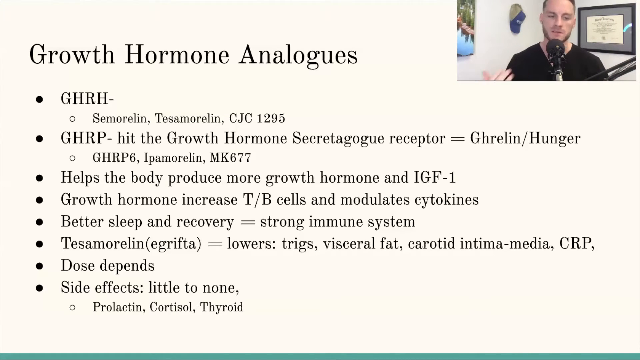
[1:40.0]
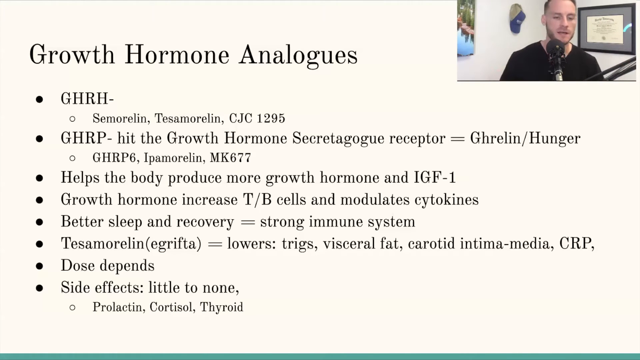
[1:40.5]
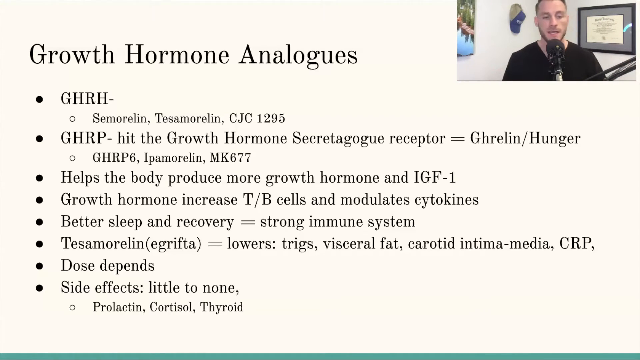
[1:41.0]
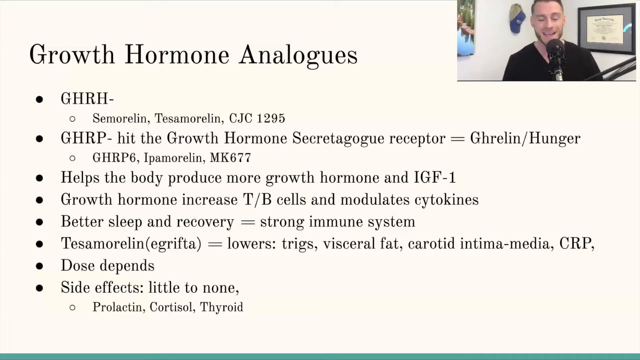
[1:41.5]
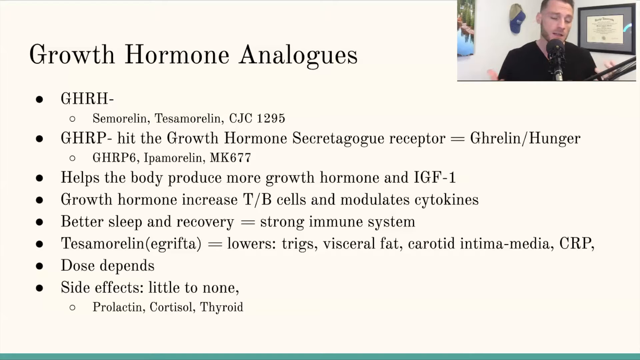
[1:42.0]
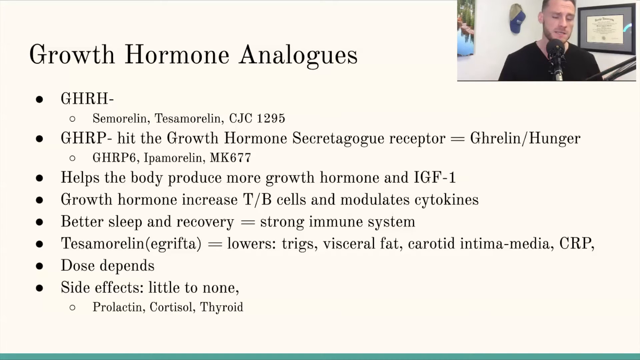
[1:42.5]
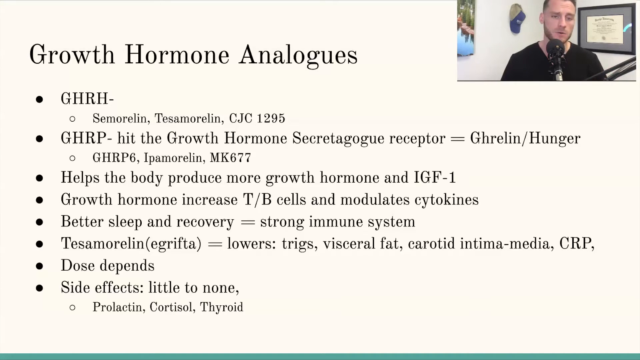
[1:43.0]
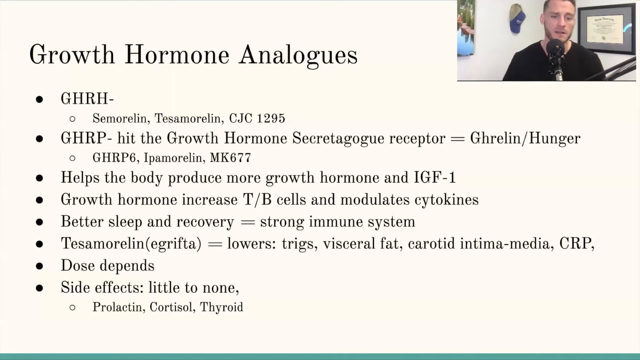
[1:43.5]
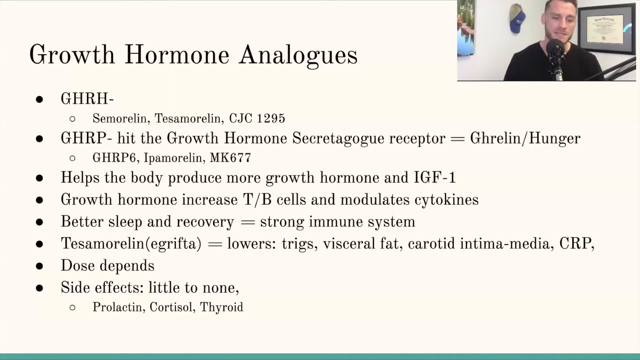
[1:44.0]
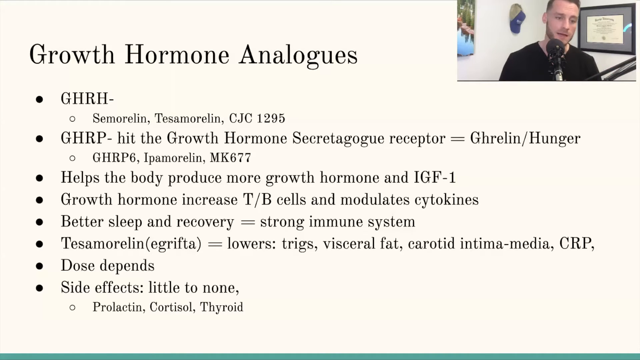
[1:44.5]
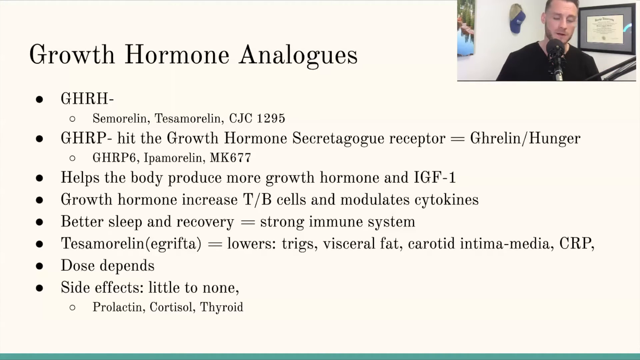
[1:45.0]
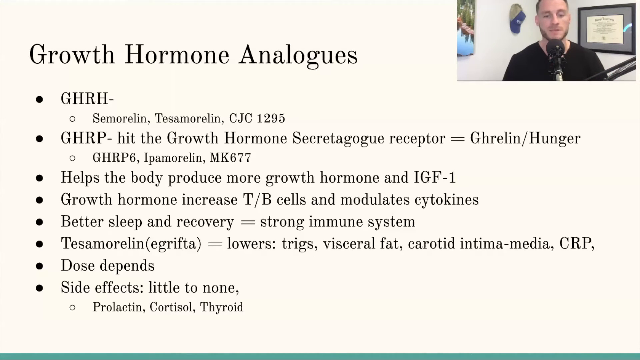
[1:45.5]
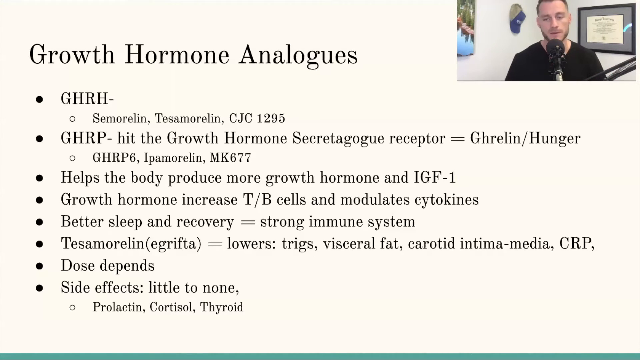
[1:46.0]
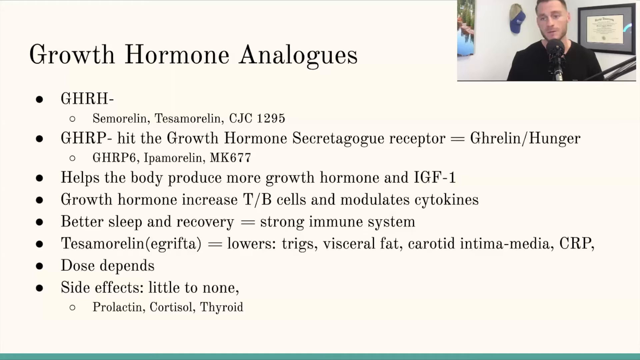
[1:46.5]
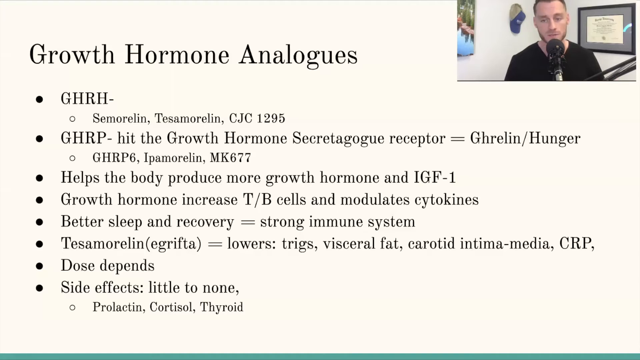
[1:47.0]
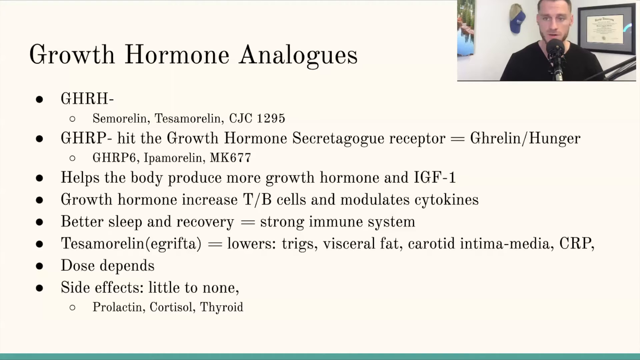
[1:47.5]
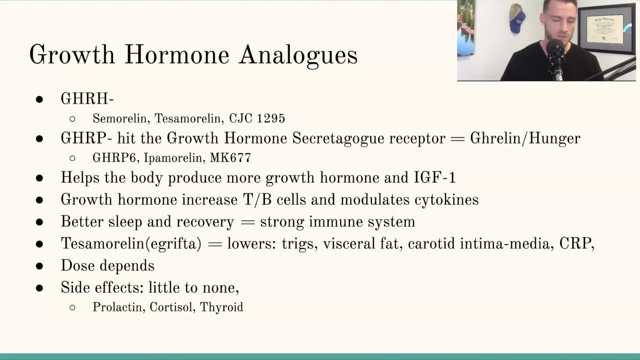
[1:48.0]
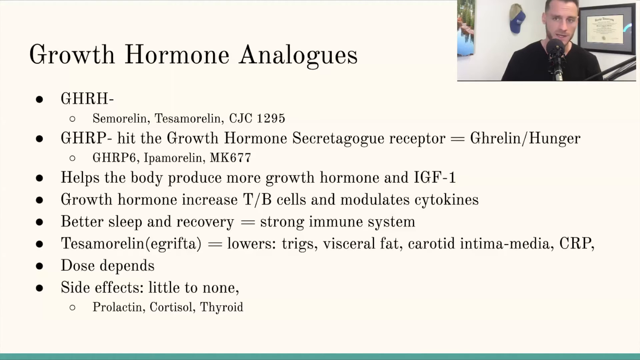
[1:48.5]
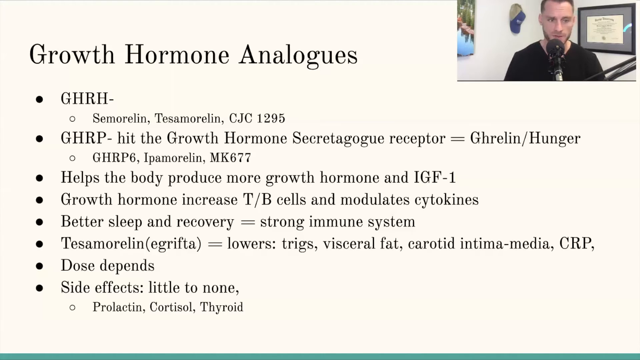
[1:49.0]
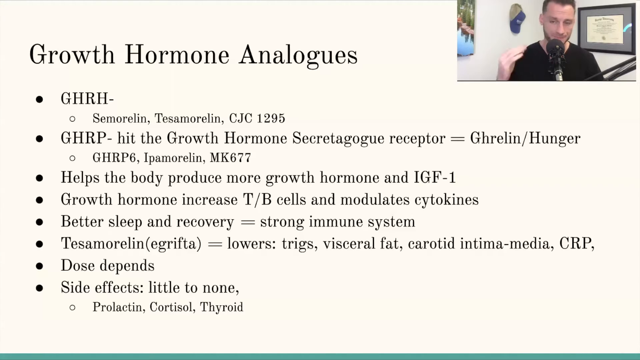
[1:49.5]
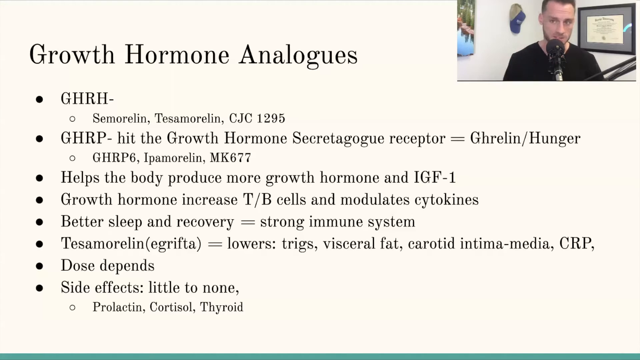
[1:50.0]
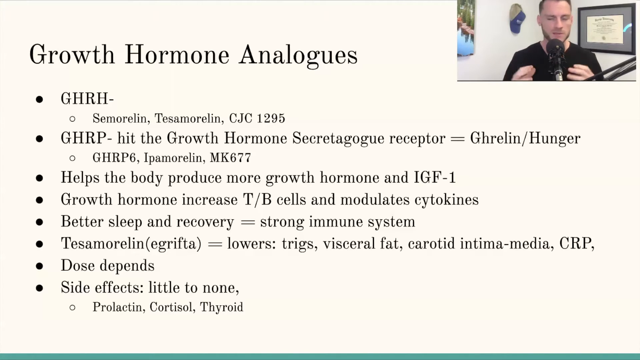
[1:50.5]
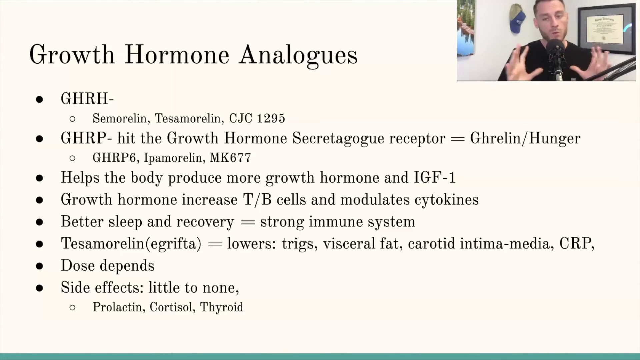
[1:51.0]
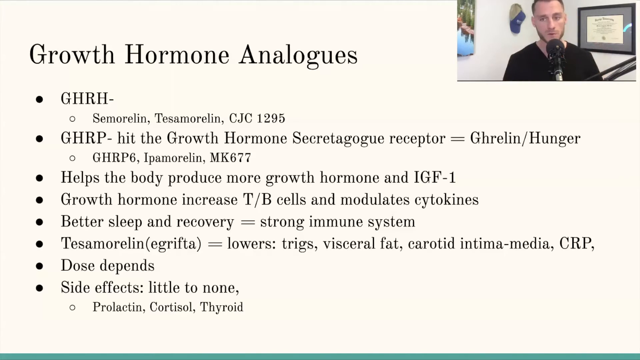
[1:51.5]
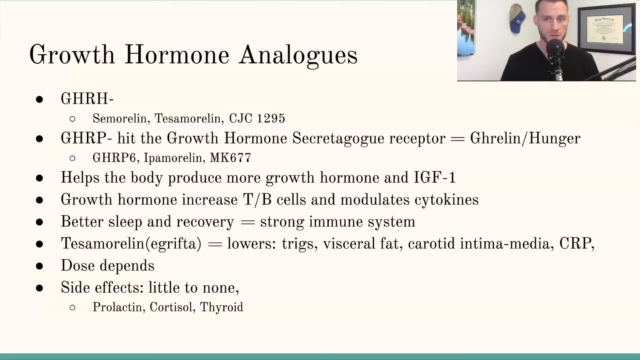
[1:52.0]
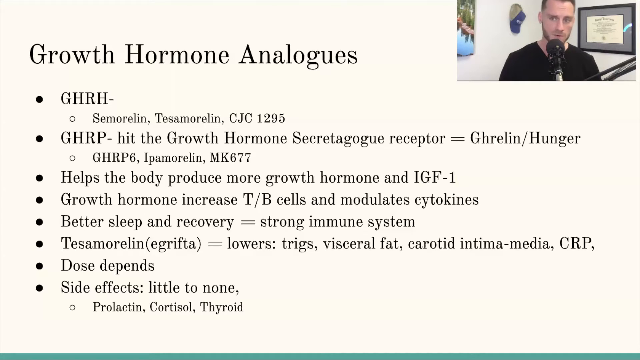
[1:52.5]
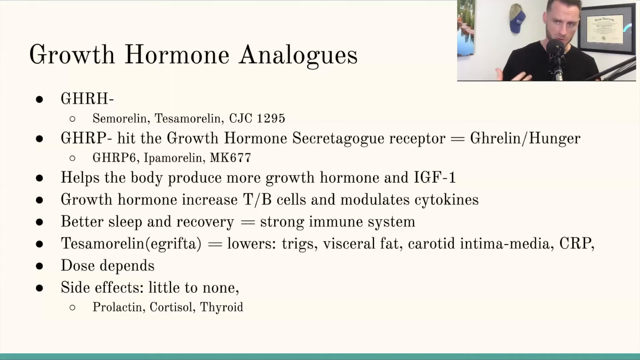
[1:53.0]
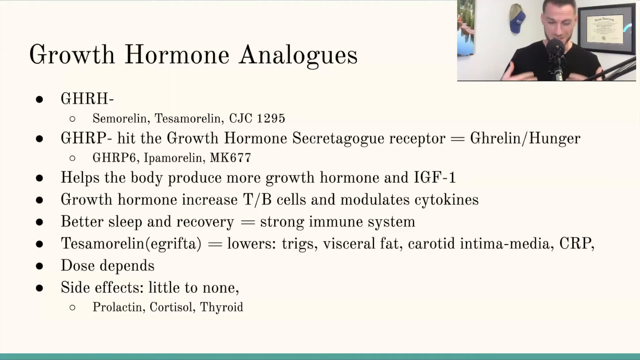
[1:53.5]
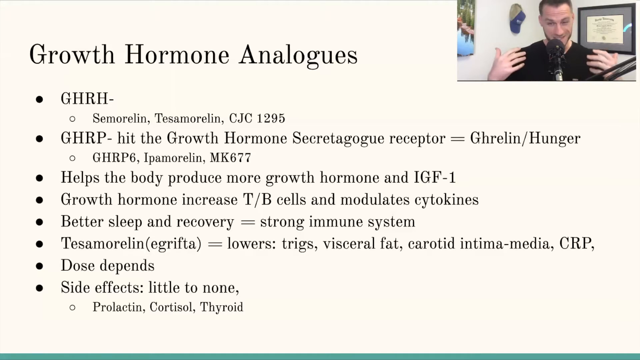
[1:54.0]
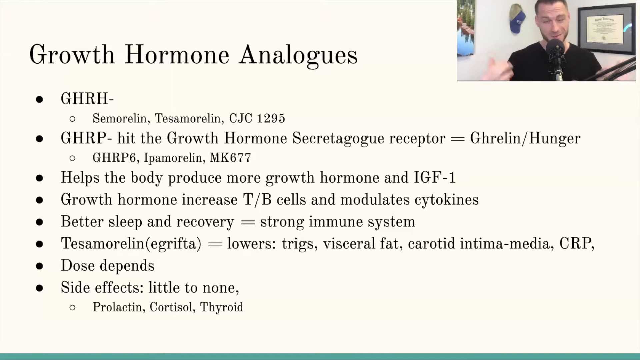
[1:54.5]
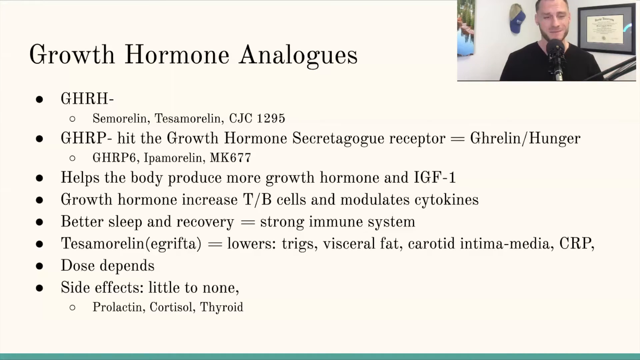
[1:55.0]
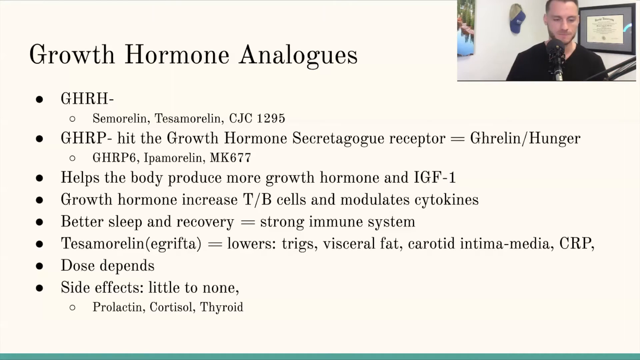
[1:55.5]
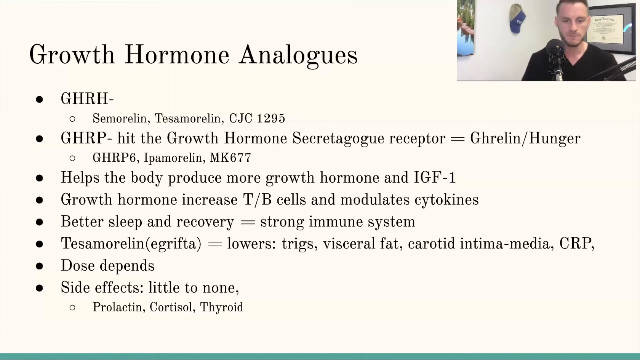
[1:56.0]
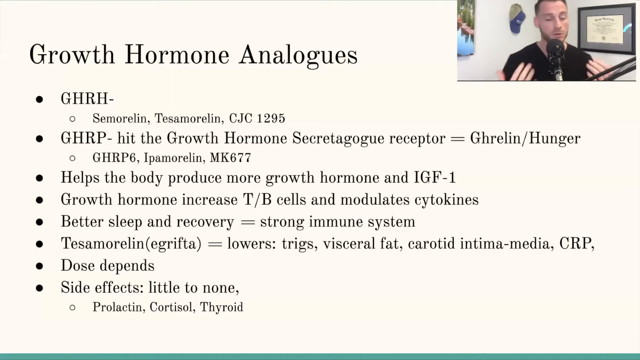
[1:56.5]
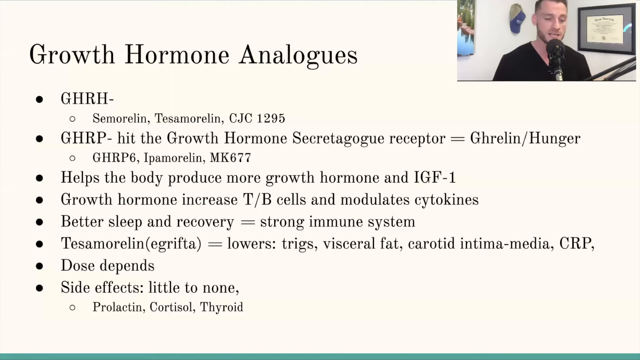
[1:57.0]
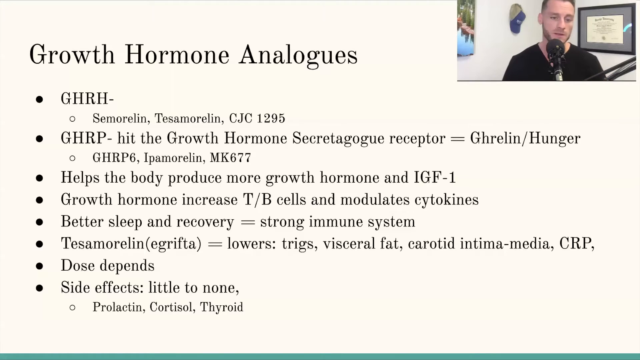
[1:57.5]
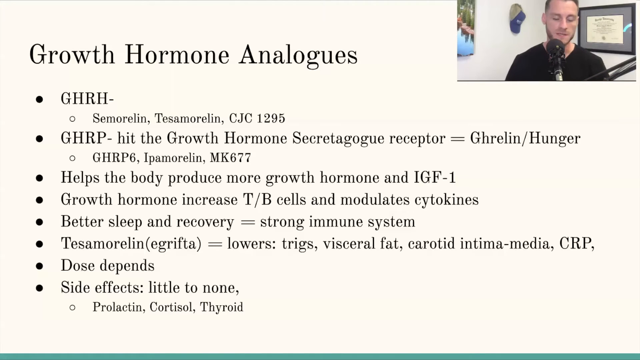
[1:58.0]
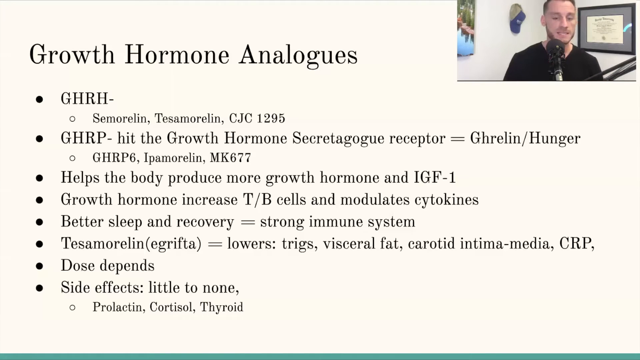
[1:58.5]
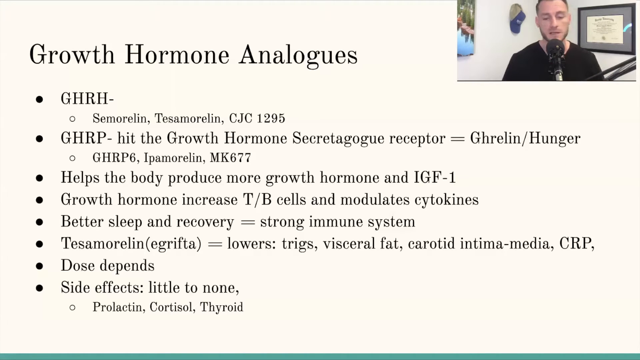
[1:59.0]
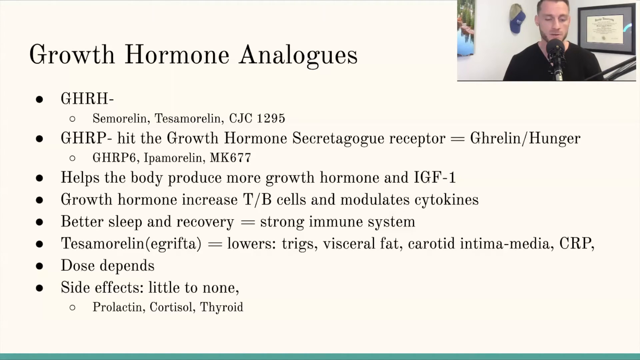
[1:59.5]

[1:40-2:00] The man continues on the growth hormone analogues slide, still using his hands as he talks. He occasionally smiles and looks like he is speaking with confidence. The setting does not look scientific; it looks more like a home office than a lab or academic setting.